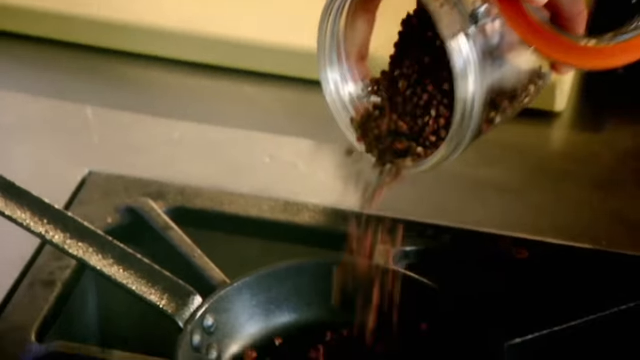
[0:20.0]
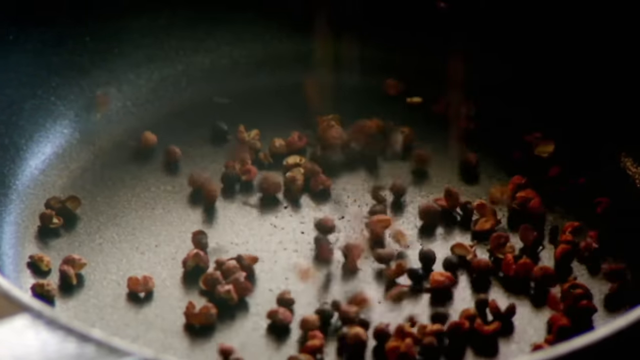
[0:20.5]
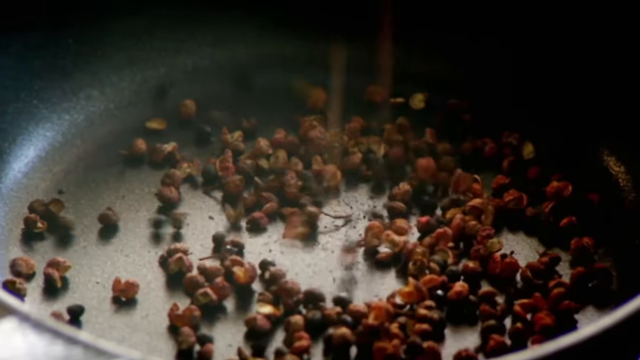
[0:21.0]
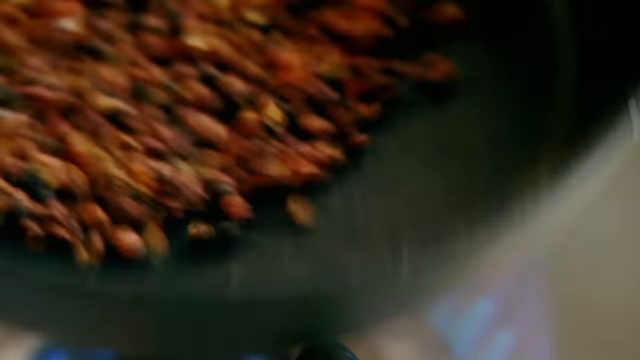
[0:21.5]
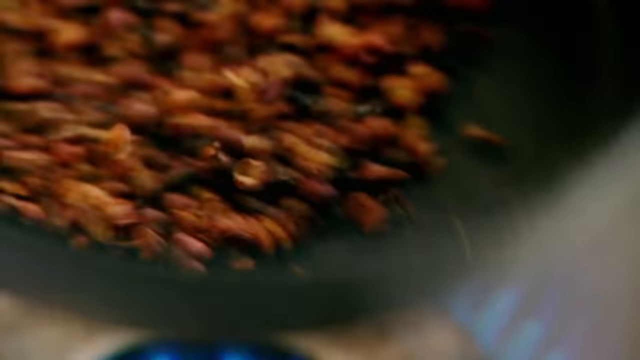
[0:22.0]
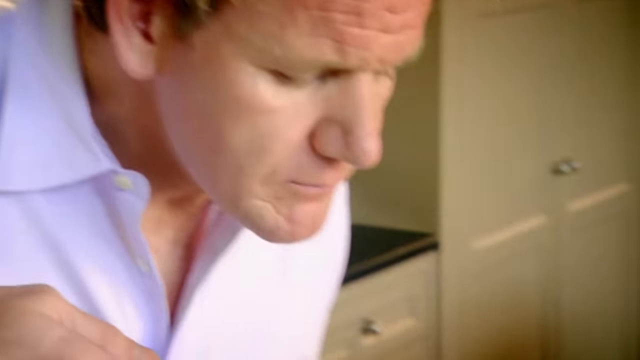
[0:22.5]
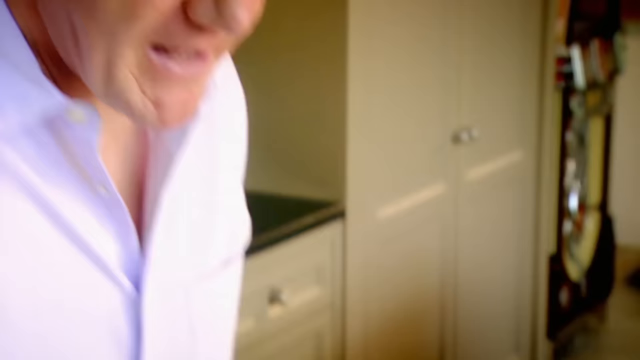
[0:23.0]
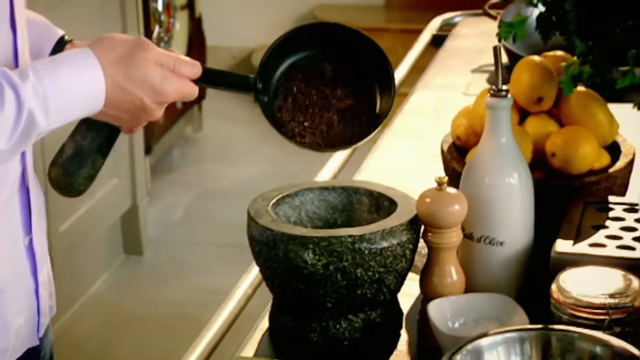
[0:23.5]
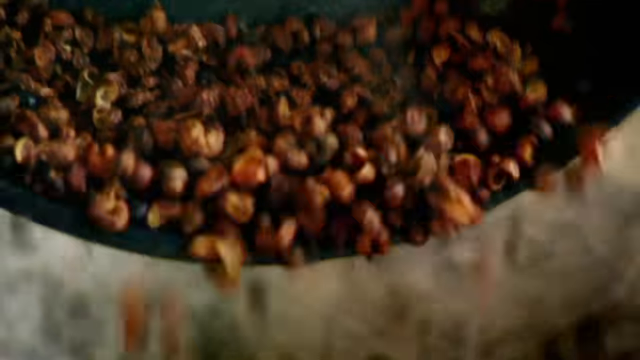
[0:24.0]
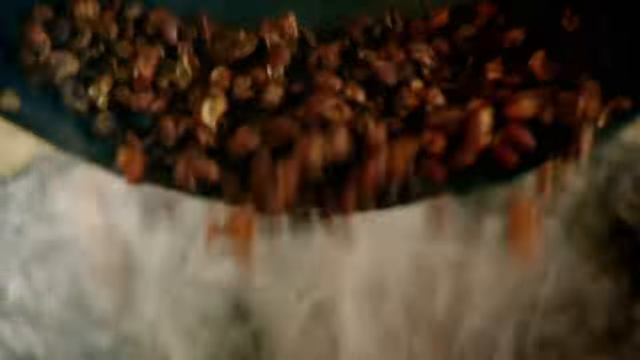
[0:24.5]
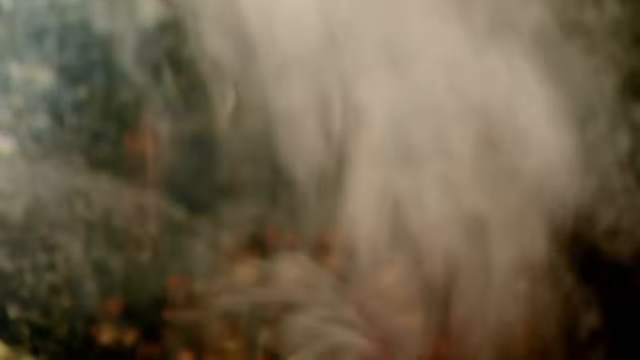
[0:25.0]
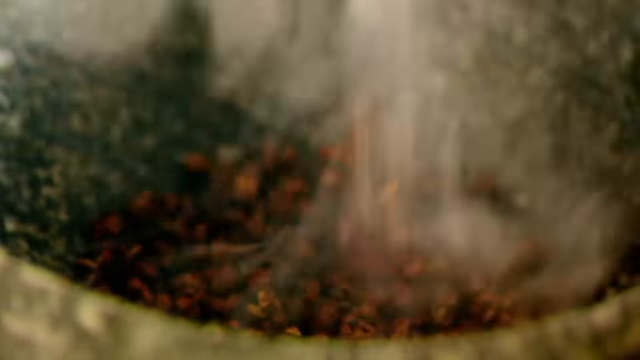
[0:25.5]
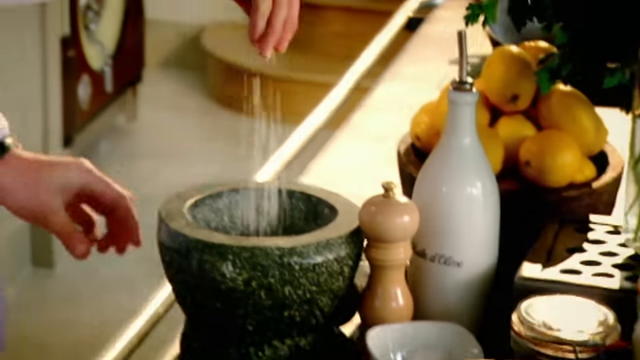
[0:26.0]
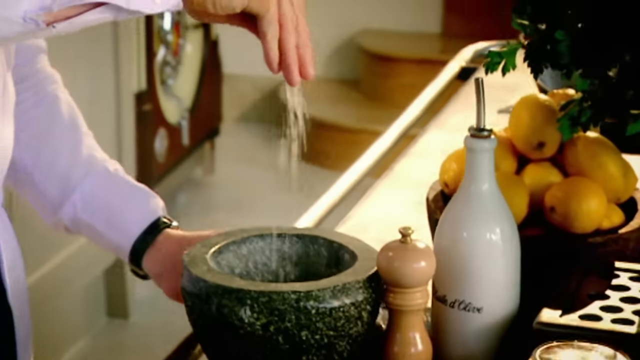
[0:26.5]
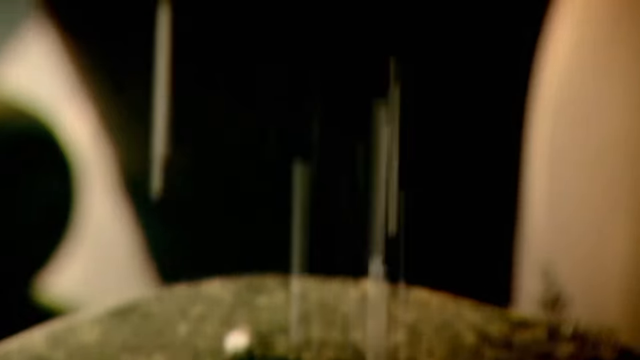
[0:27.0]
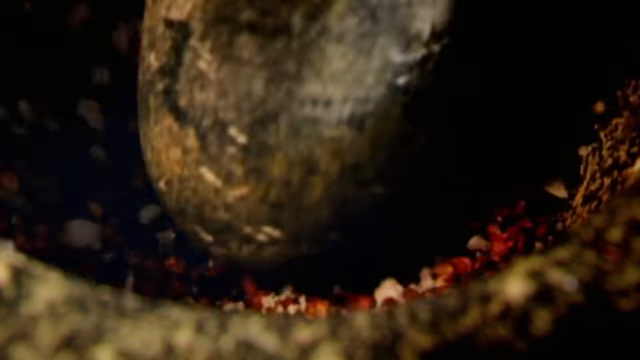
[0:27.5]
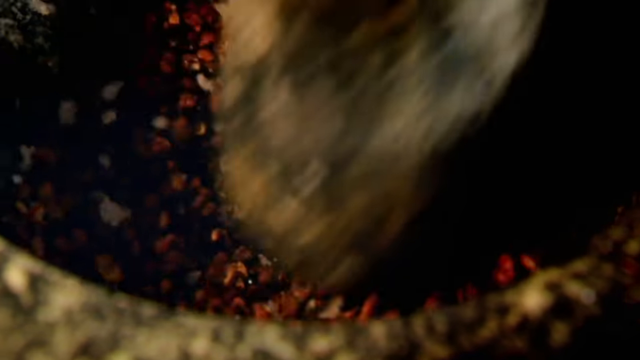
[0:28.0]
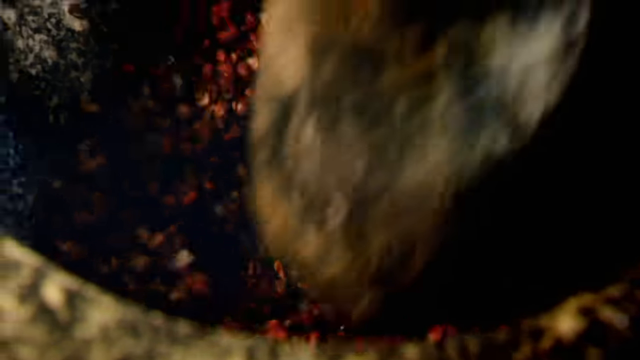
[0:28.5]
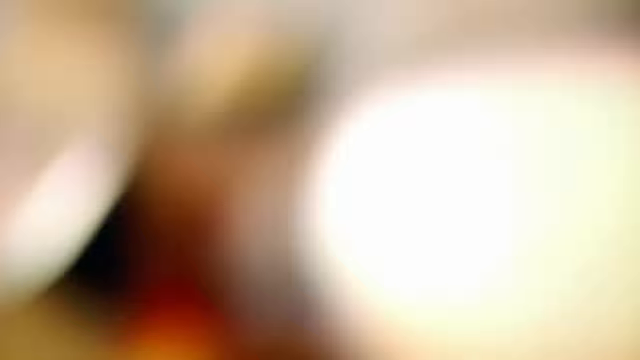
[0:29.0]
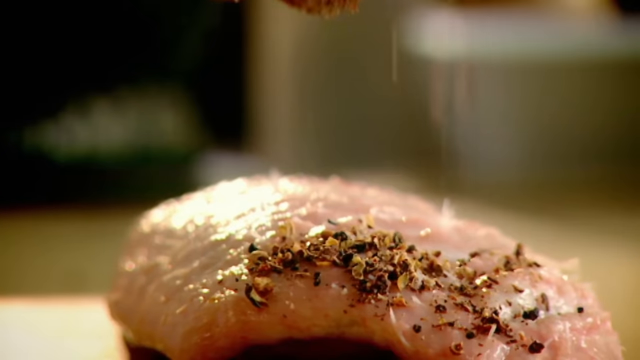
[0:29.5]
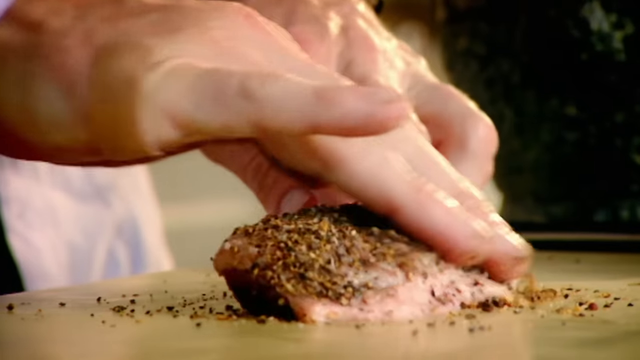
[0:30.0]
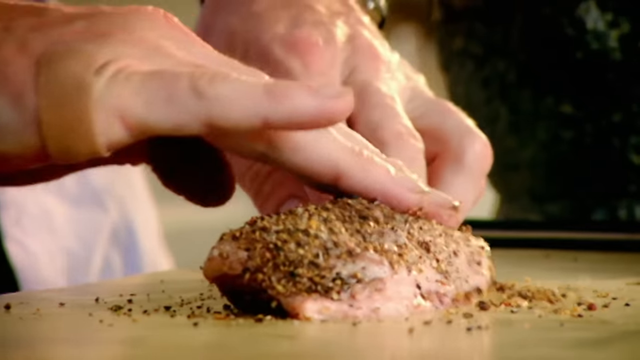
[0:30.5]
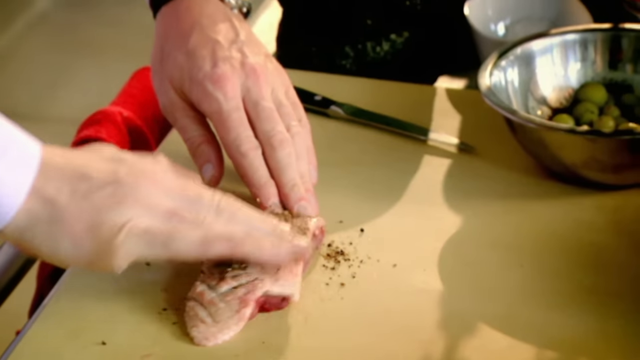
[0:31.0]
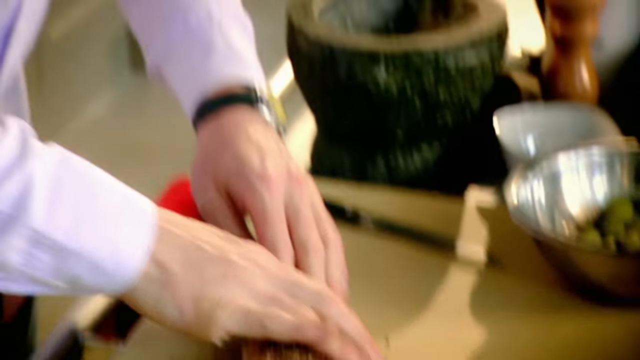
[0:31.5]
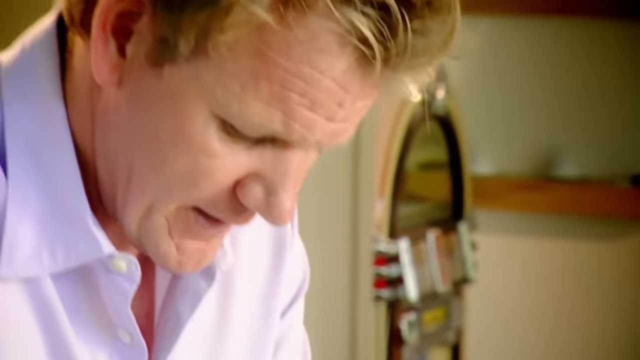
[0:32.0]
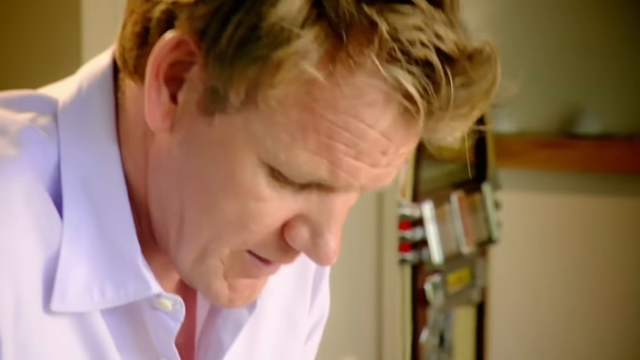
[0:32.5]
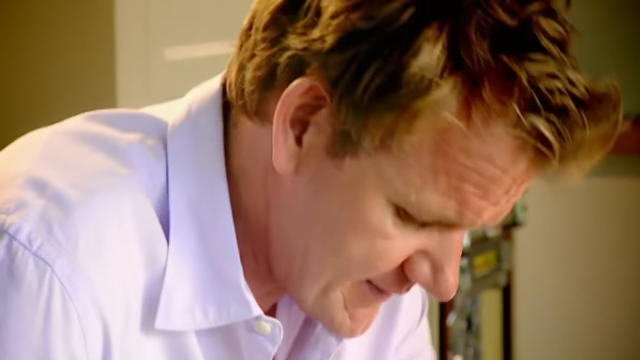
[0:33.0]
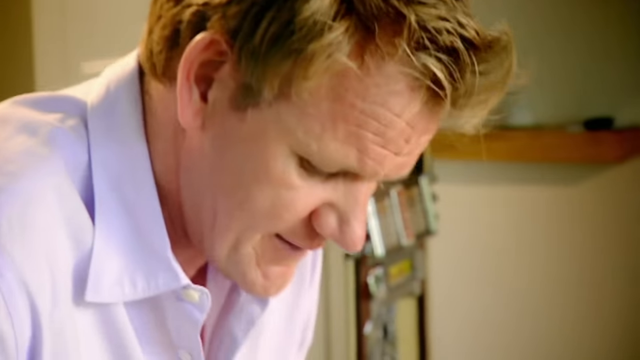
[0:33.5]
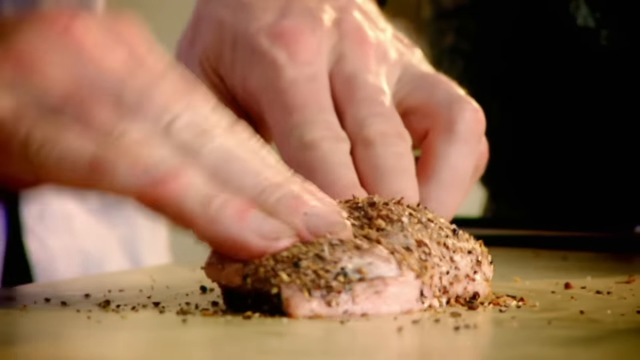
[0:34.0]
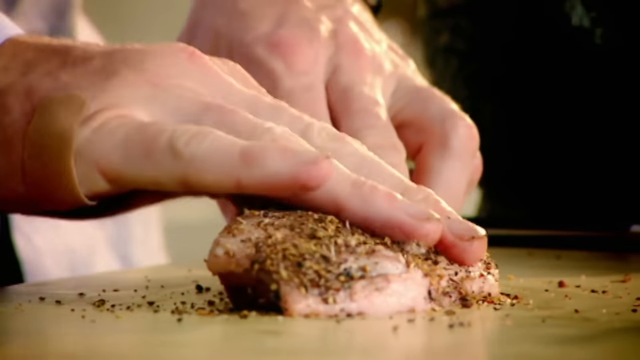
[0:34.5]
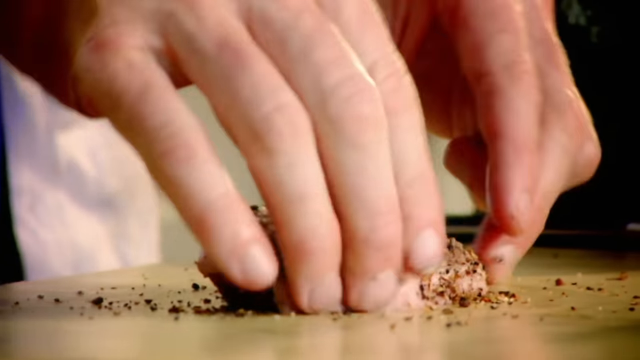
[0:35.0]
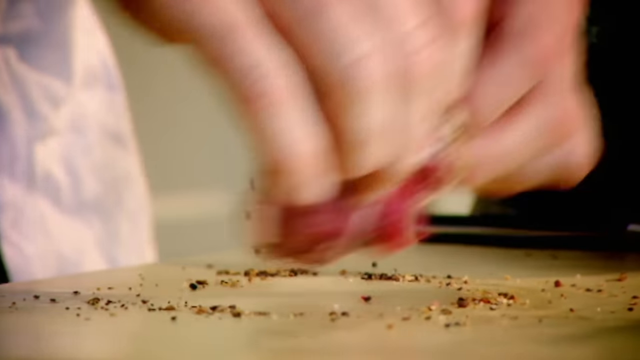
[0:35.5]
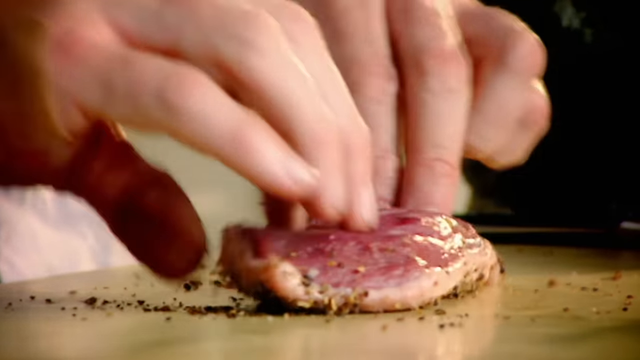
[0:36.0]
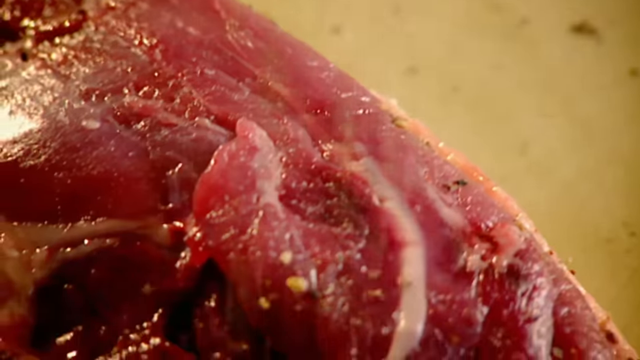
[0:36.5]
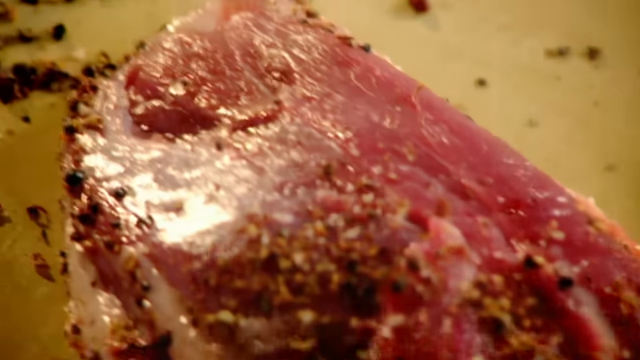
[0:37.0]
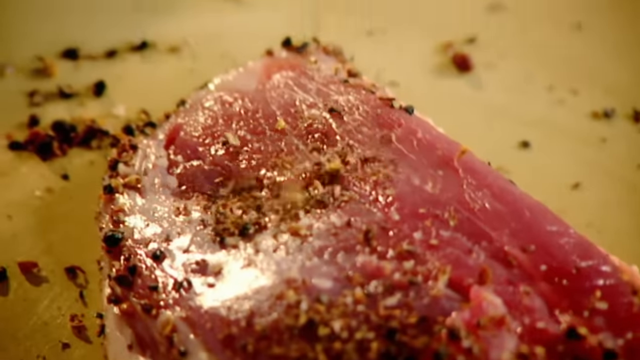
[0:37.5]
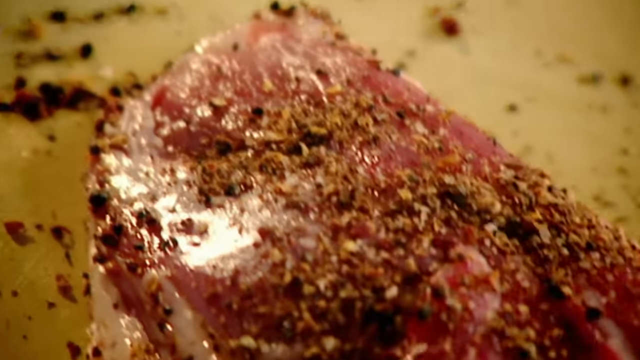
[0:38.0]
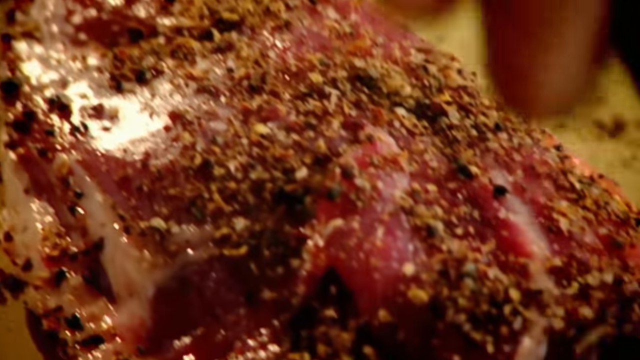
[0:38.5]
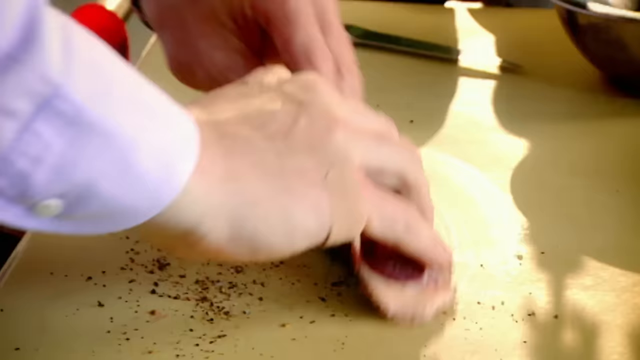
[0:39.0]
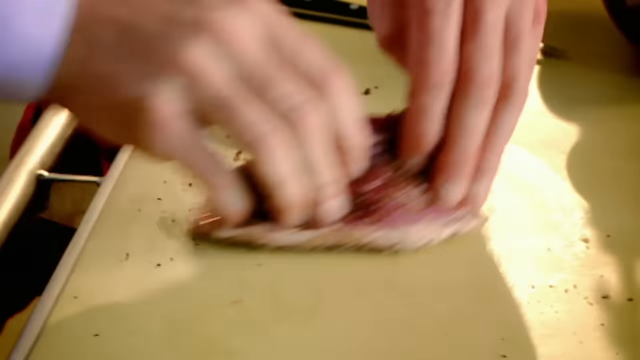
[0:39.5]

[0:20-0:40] Some items shown are light-colored and look a bit green, with something on top that looks yellowish. The man pours herbs into a pan on a black stove, then slightly turns the pan, holding it by the handle. He pours the heated herbs into a hand grinder and grinds them until they are slightly fine. He then brushes the herbs into the steak with his hand so it is well seasoned. He turns the steak over, pours the herbs on top again and brushes them in with his hand while talking, making sure the steak is covered with the herbs.